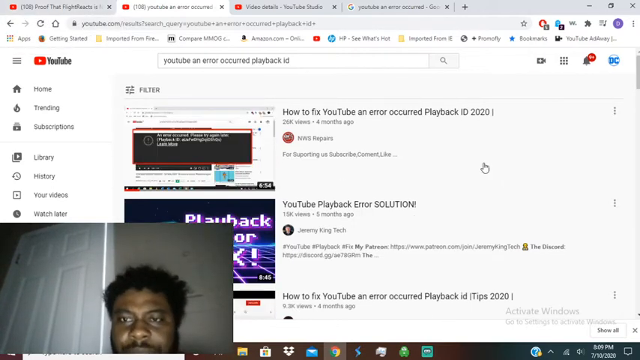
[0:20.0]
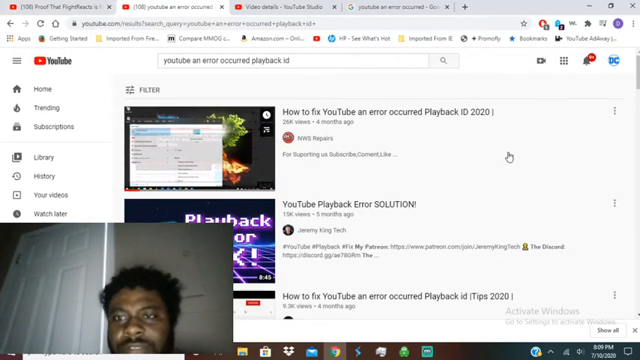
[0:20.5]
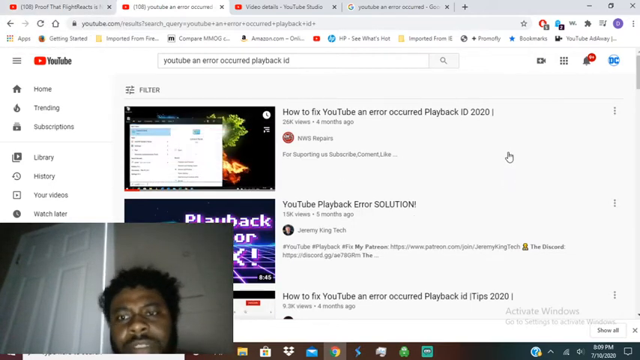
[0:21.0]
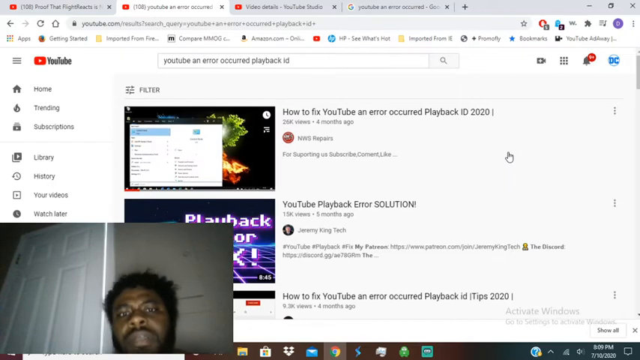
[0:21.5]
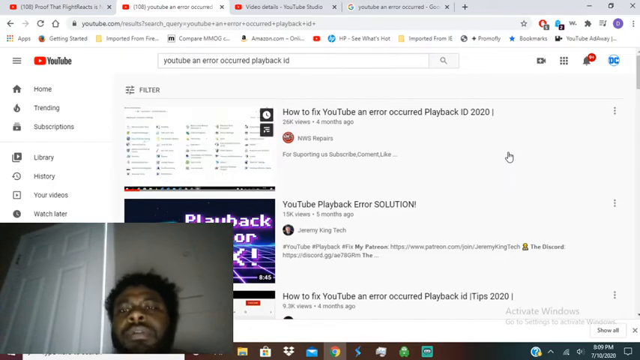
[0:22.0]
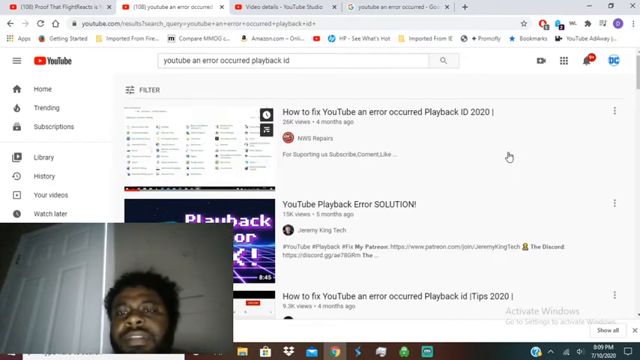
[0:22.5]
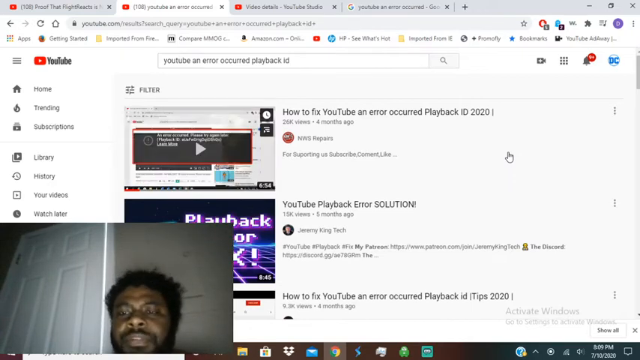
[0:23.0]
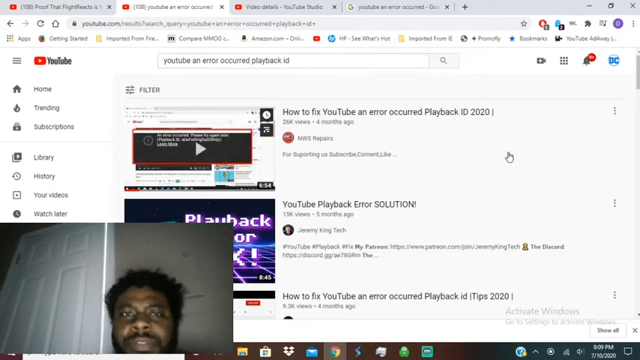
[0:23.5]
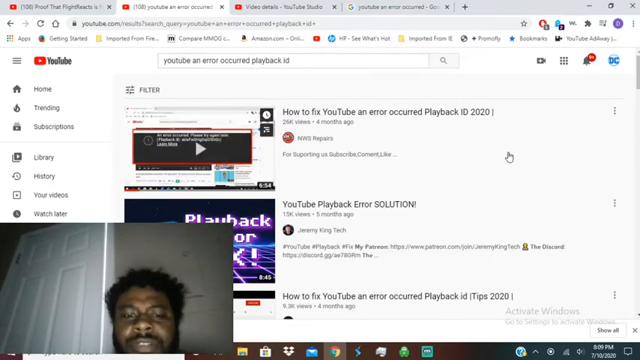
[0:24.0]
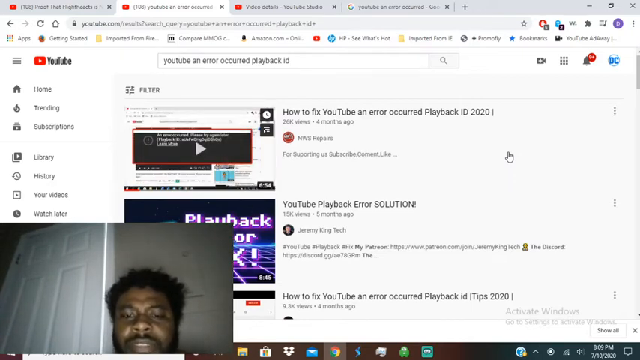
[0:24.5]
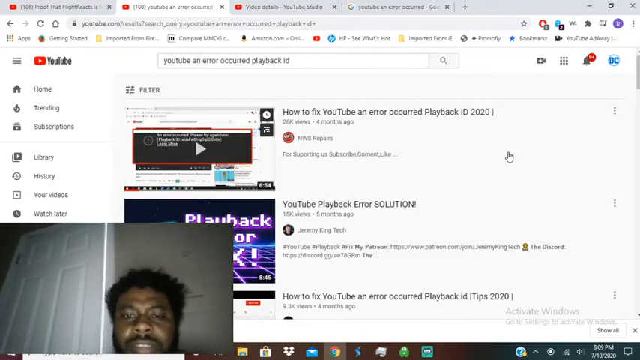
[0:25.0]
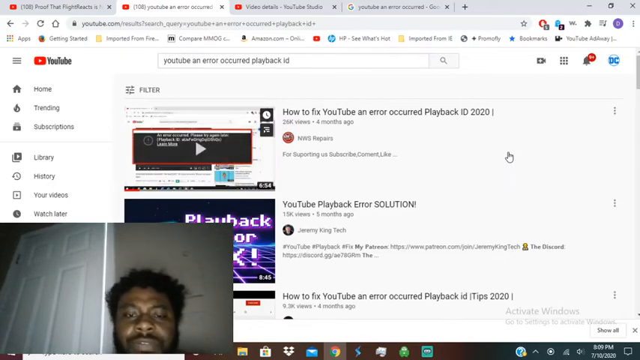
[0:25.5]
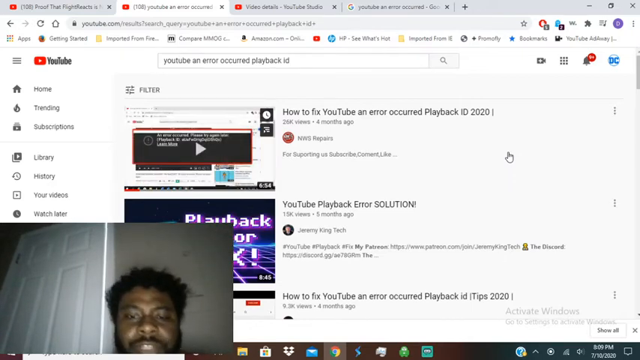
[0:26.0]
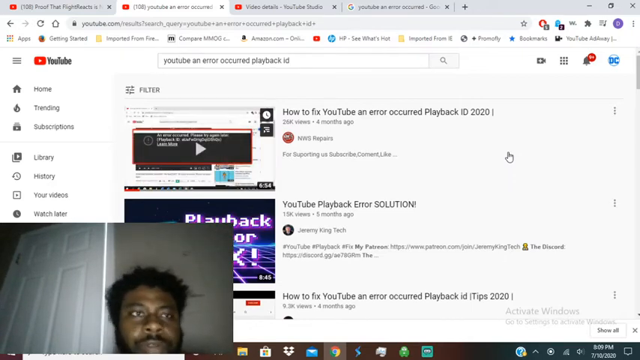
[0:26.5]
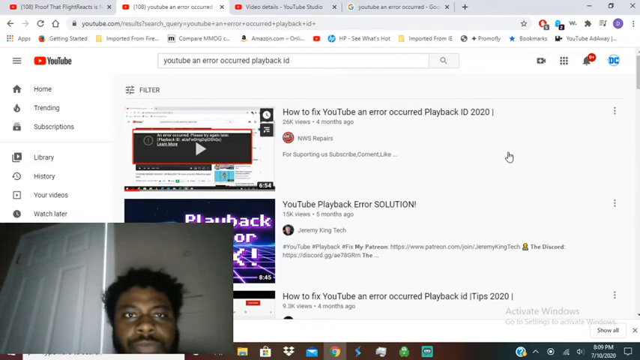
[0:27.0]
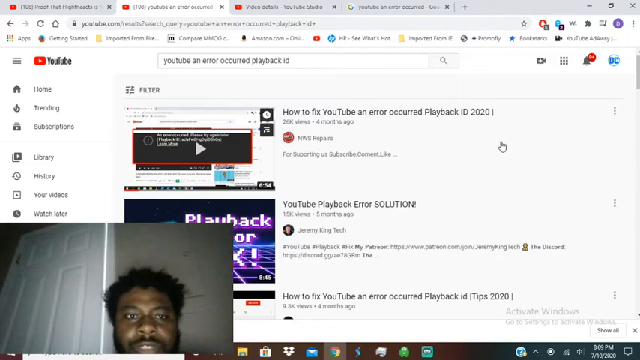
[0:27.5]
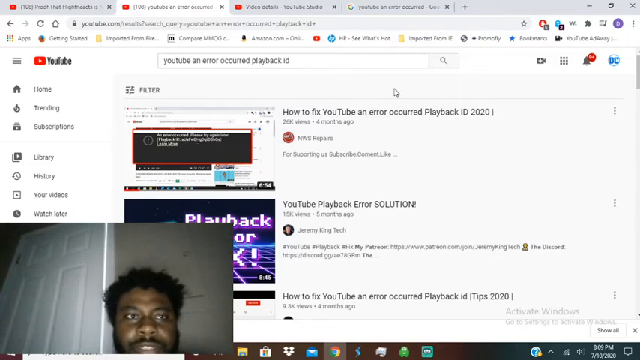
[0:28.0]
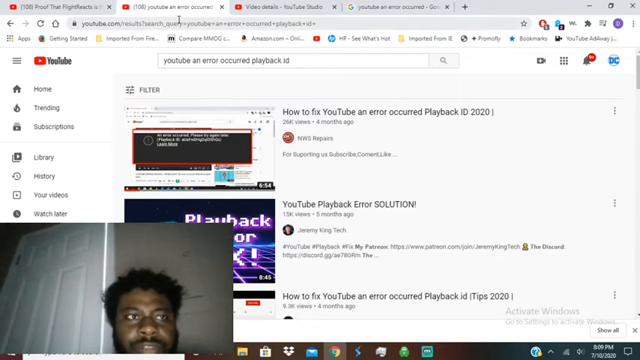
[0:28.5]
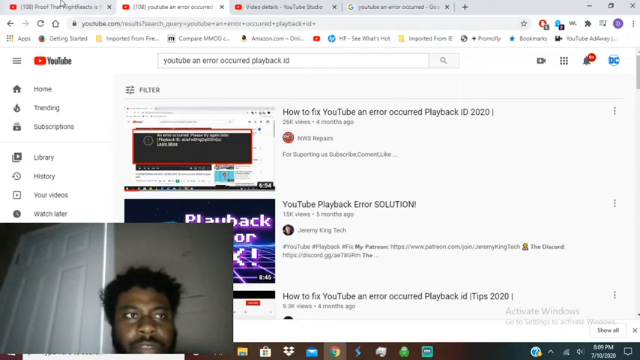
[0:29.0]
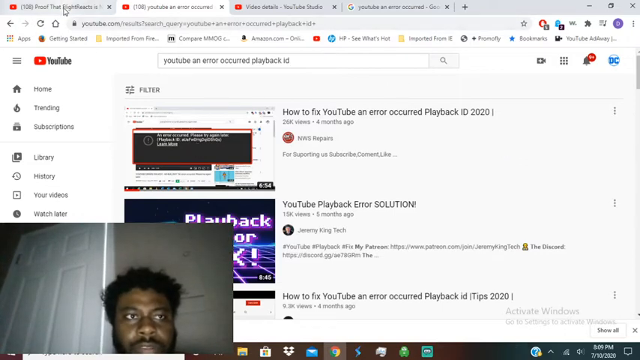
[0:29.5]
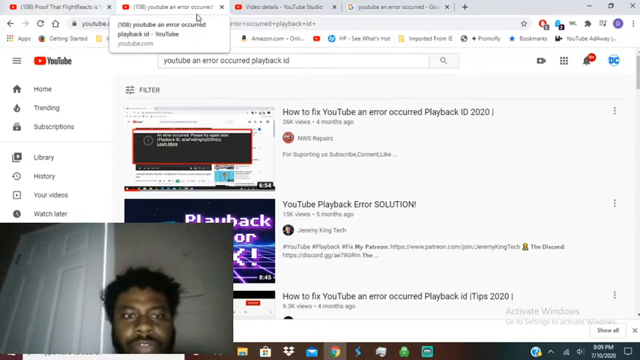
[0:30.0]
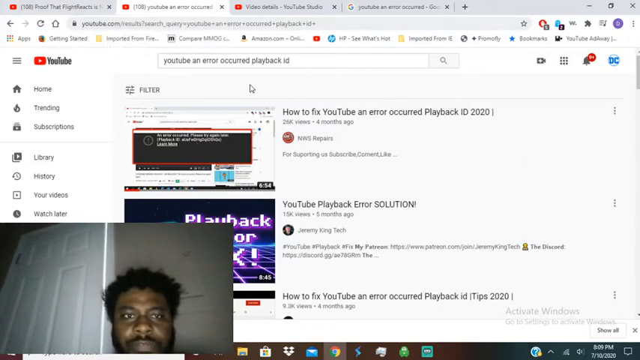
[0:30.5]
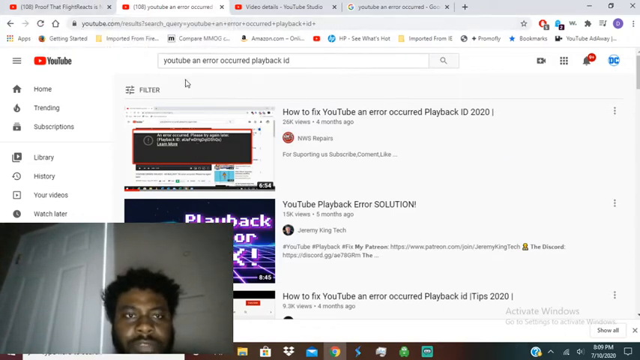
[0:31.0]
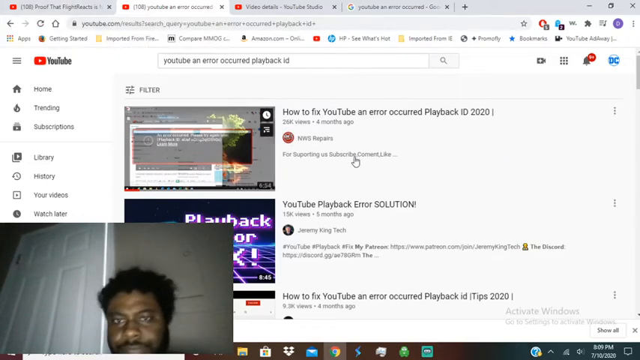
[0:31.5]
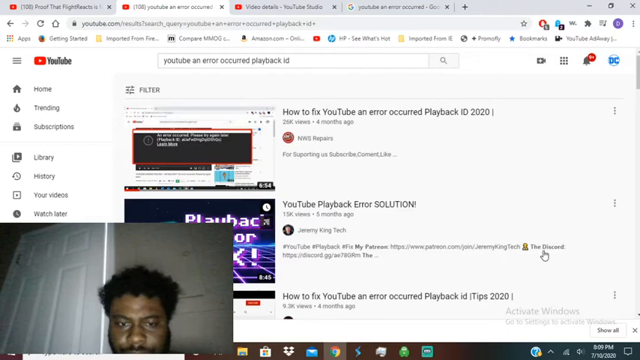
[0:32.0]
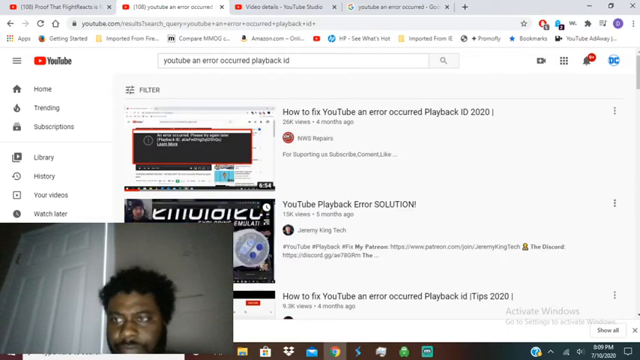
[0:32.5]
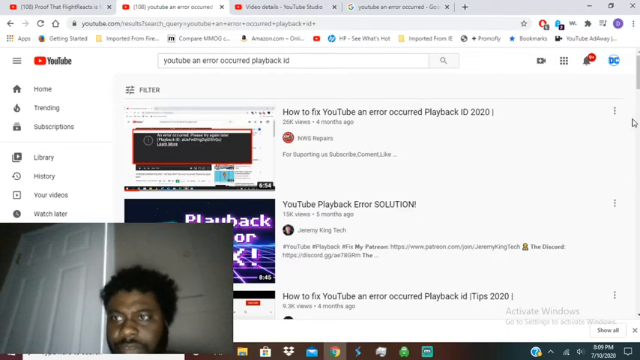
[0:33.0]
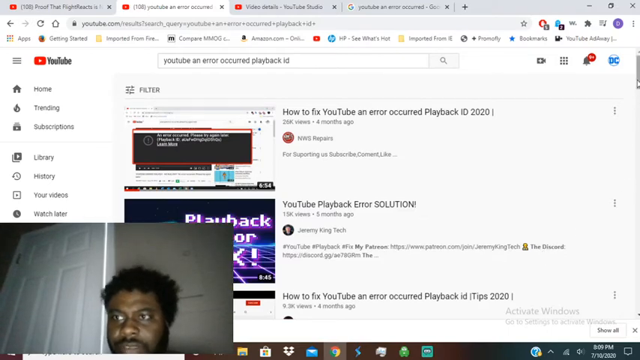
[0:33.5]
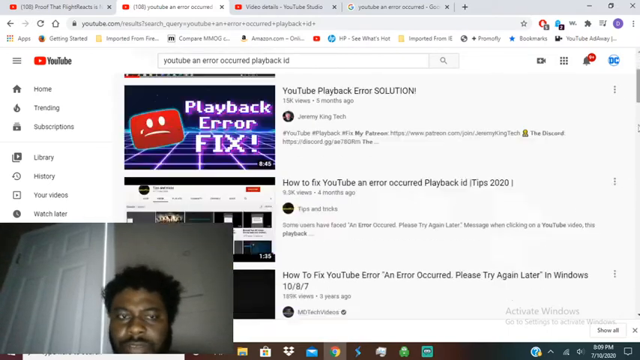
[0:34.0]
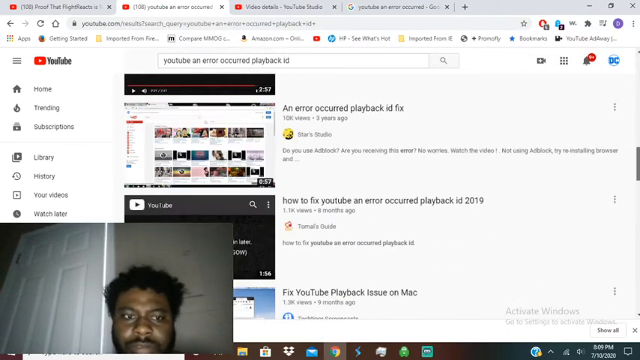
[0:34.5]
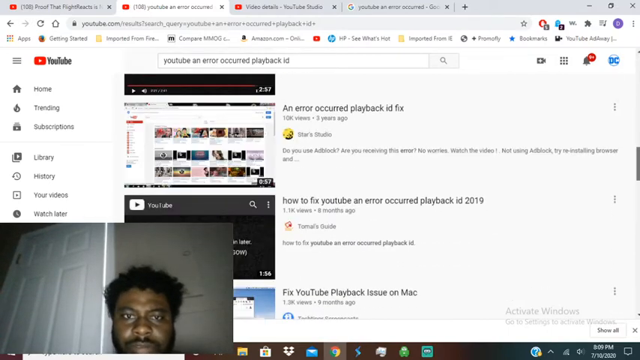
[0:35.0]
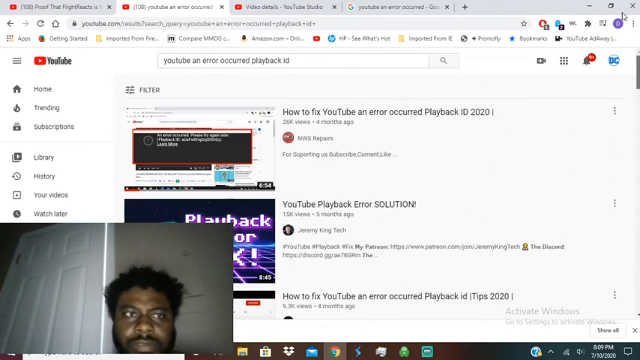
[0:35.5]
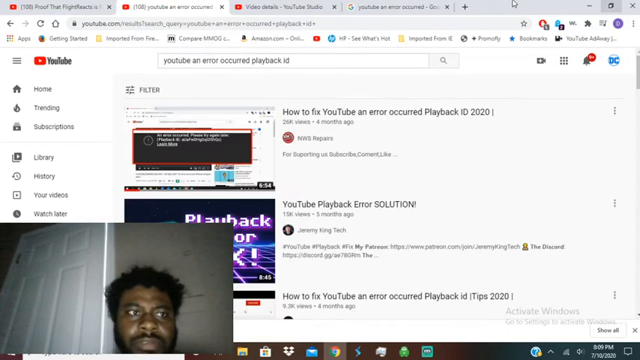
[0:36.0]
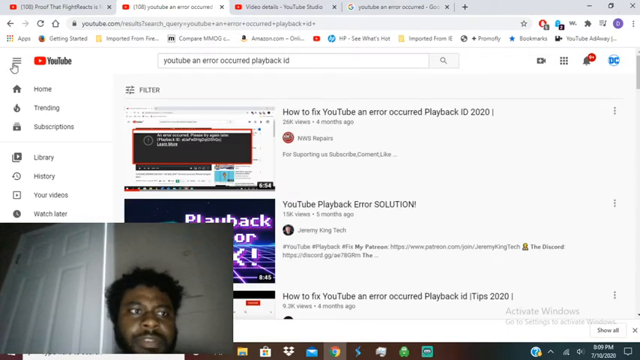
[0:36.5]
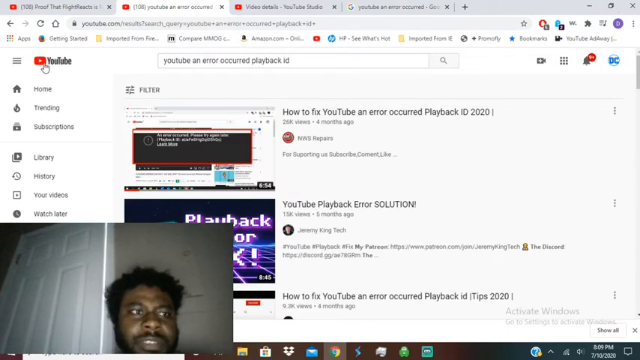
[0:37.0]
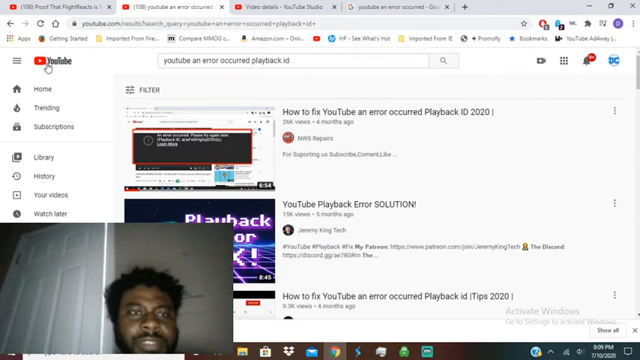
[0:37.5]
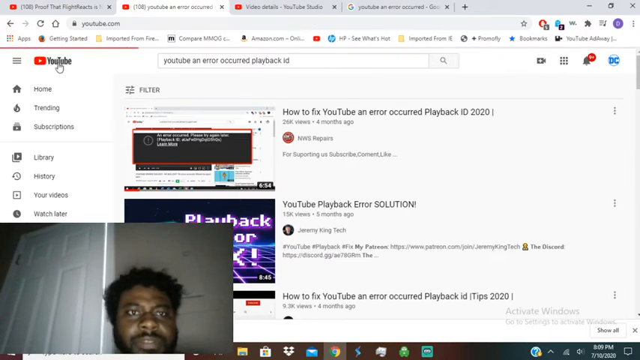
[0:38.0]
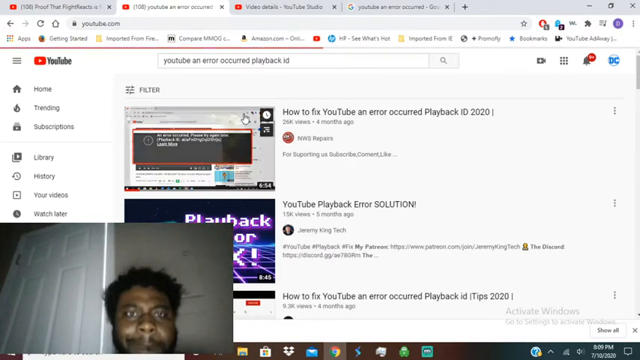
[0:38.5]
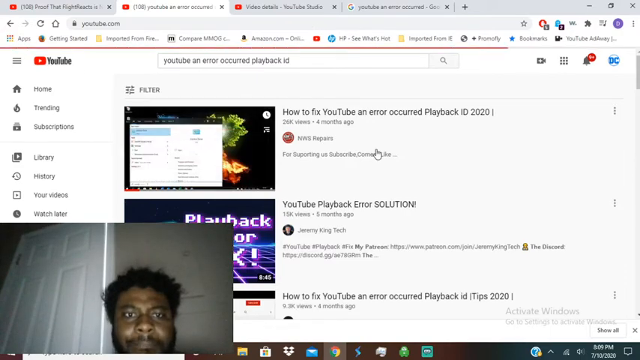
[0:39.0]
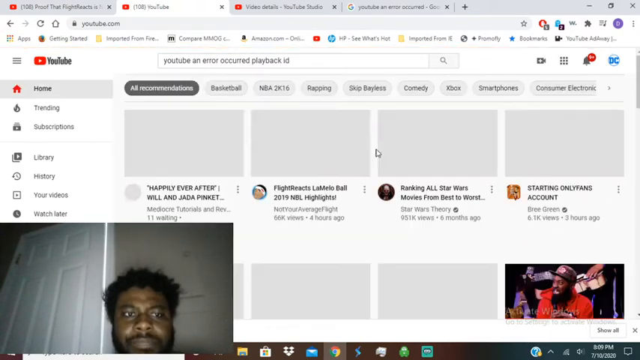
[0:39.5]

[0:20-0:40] A YouTube page is on a PC monitor, with three other YouTube tabs open. In the bottom left corner is a live video of a man who appears frustrated. He clicks on a YouTube video, "How to Fix YouTube an Error Occurred Playback ID 2020." He talks while on this video, then goes to the first tab, which reads "Proof that Flight Reacts is no longer the worst basketball" and continues beyond what is visible. He comes back to the page he was on, scrolls down with his cursor, then clicks on the YouTube icon in the left column. He is smiling a bit now. The page loads, again showing YouTube an error occurred playback ID, and three videos are visible, including "How to fix YouTube an error occurred playback" and "YouTube playback error solution."